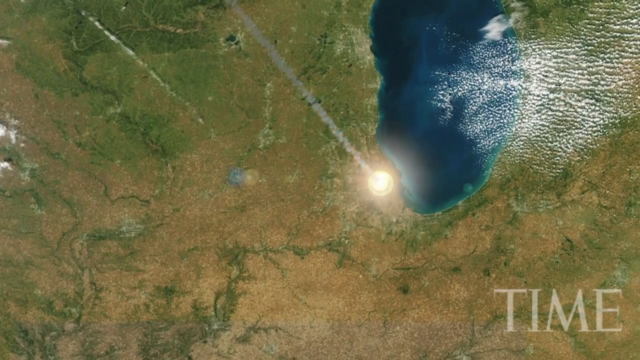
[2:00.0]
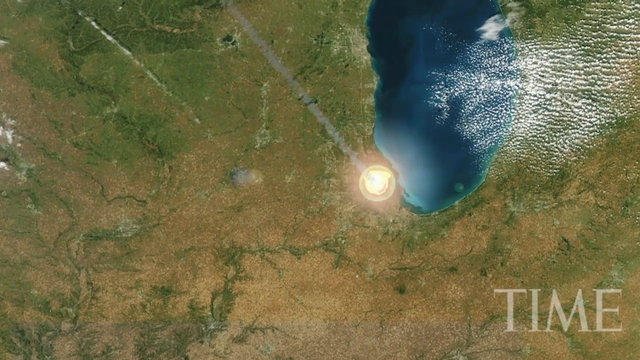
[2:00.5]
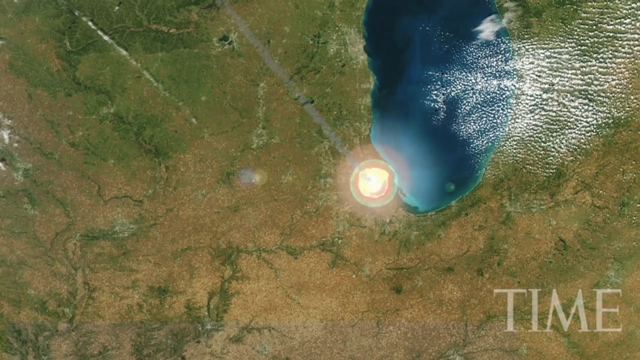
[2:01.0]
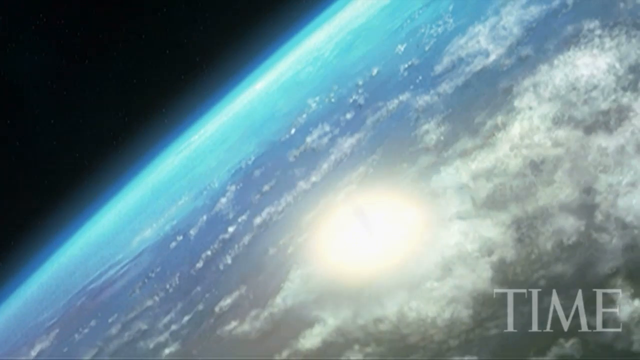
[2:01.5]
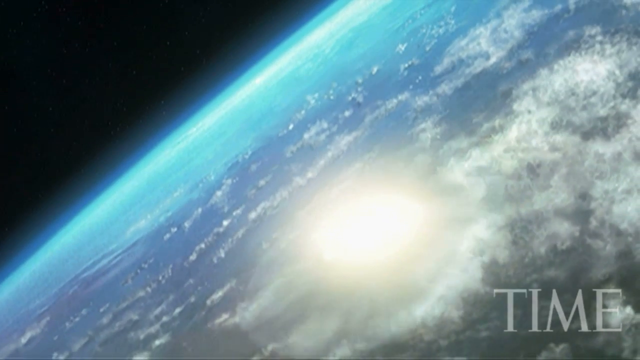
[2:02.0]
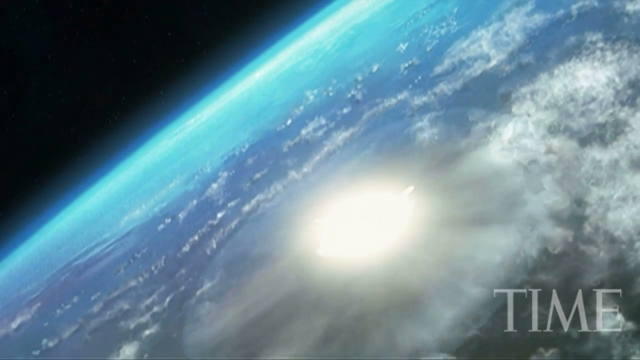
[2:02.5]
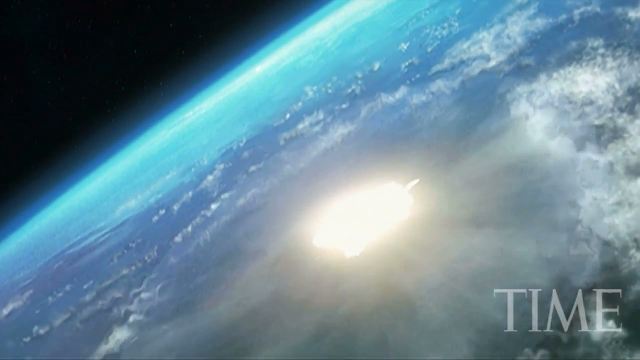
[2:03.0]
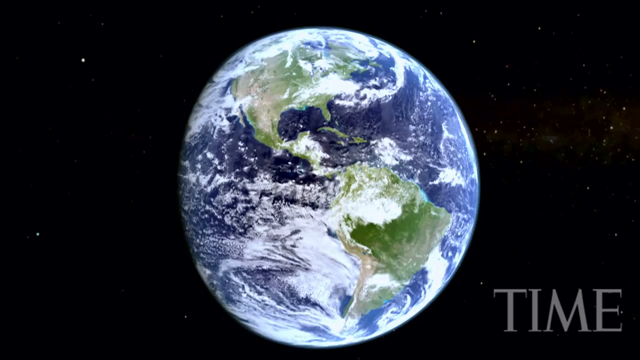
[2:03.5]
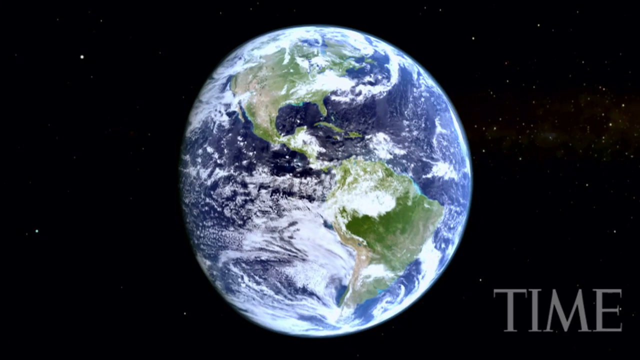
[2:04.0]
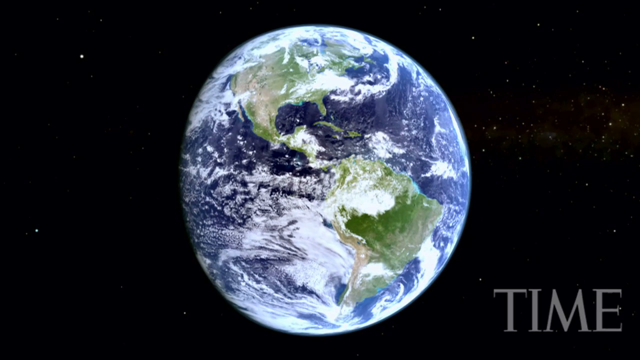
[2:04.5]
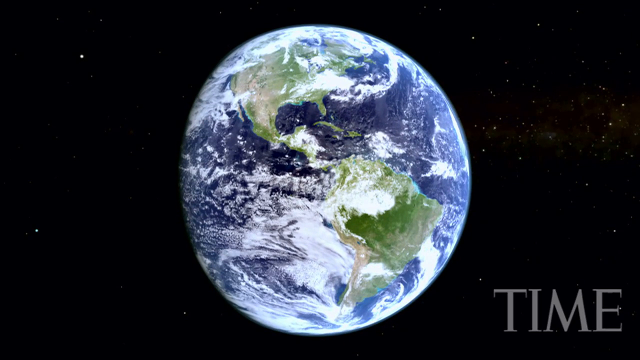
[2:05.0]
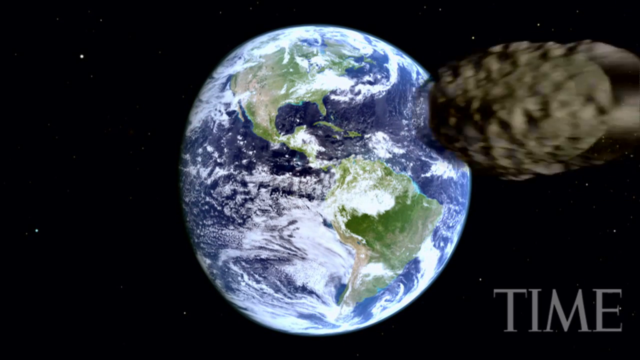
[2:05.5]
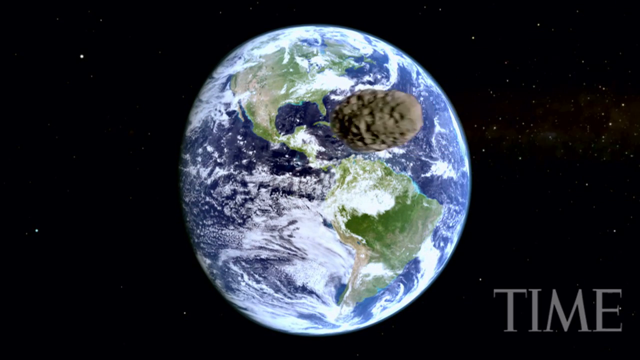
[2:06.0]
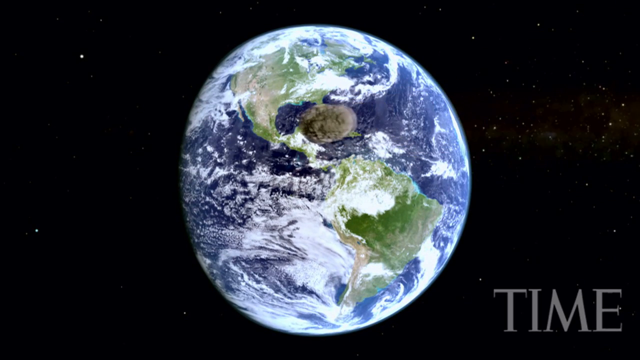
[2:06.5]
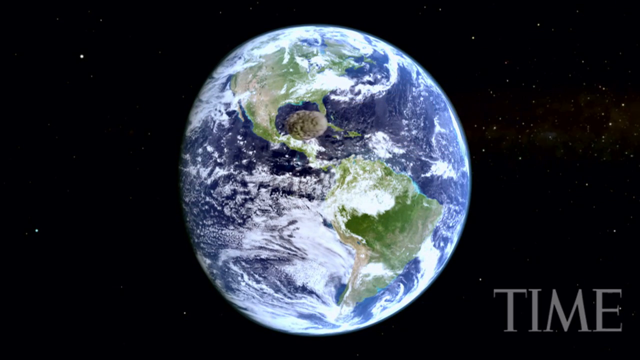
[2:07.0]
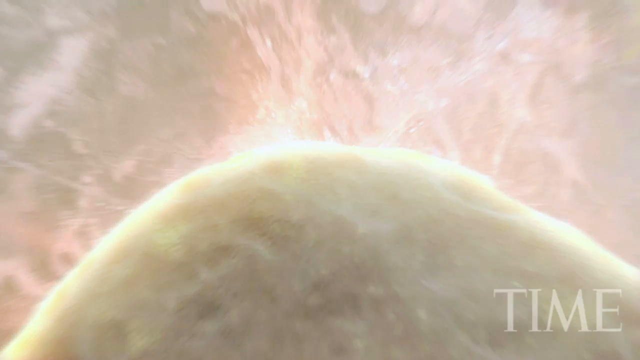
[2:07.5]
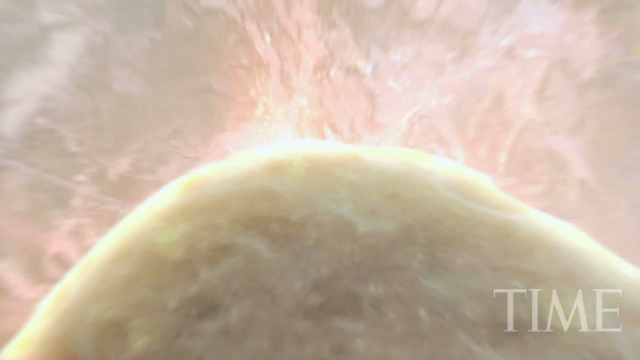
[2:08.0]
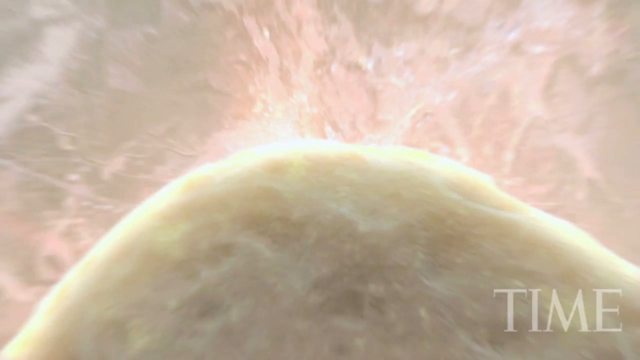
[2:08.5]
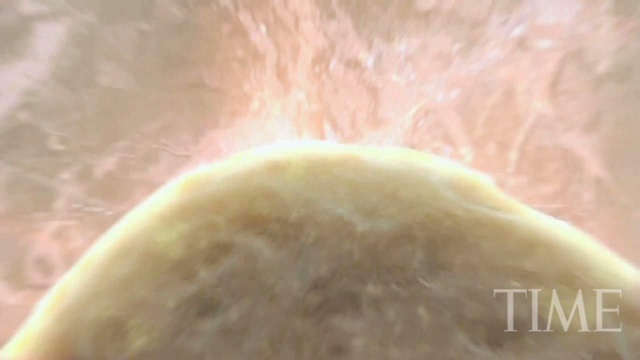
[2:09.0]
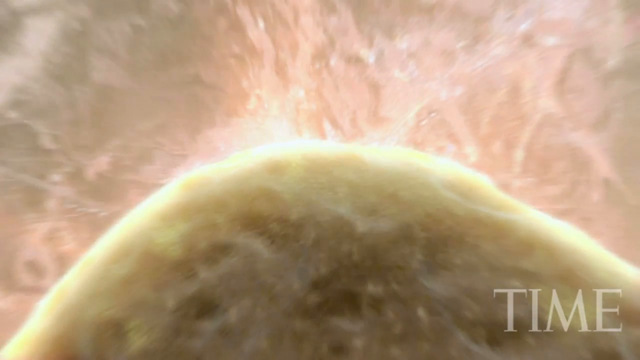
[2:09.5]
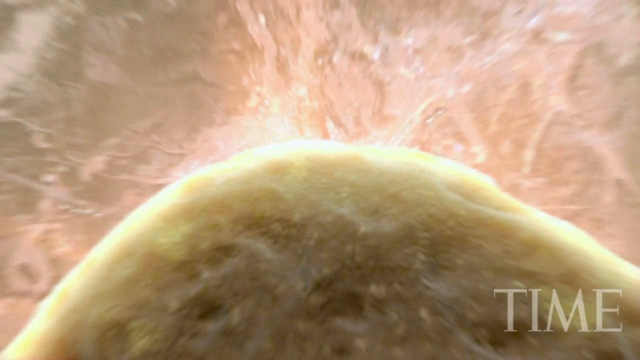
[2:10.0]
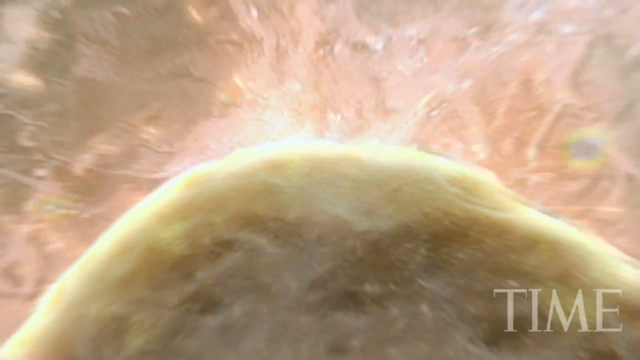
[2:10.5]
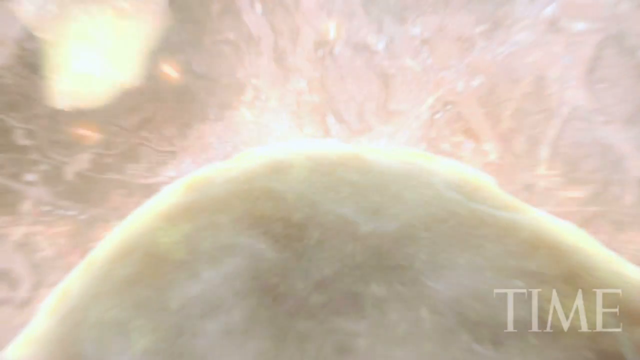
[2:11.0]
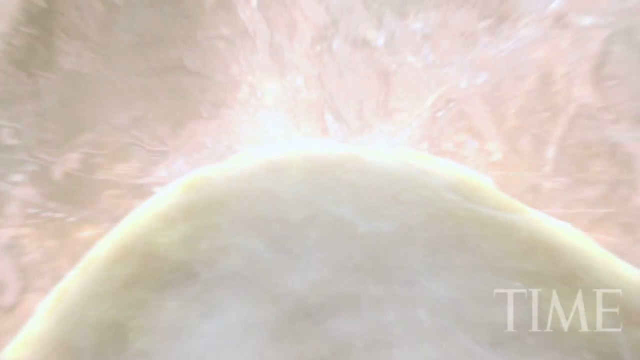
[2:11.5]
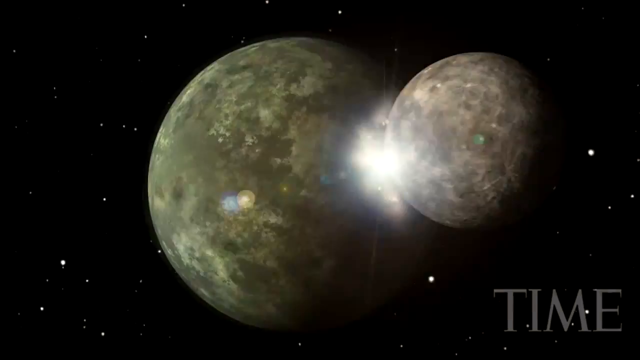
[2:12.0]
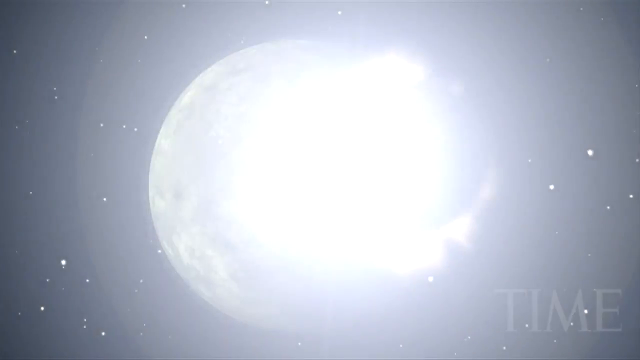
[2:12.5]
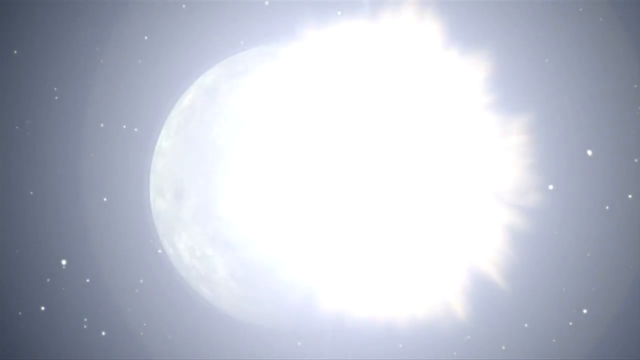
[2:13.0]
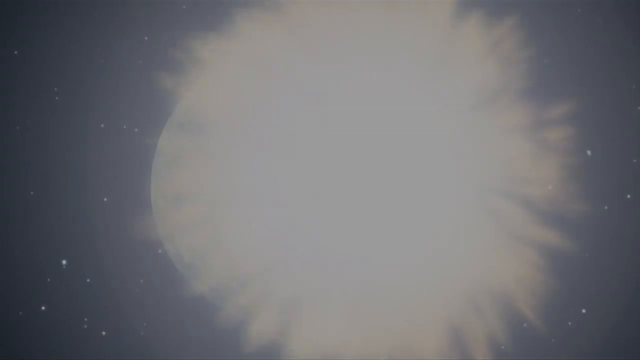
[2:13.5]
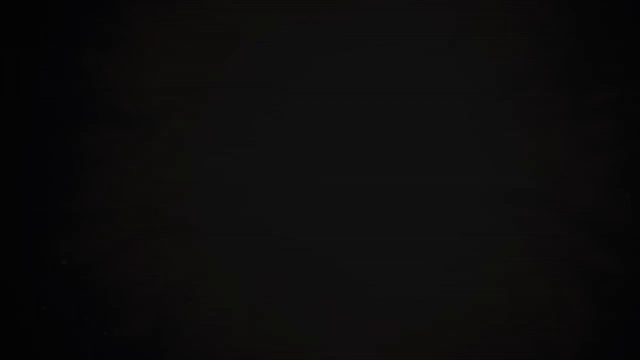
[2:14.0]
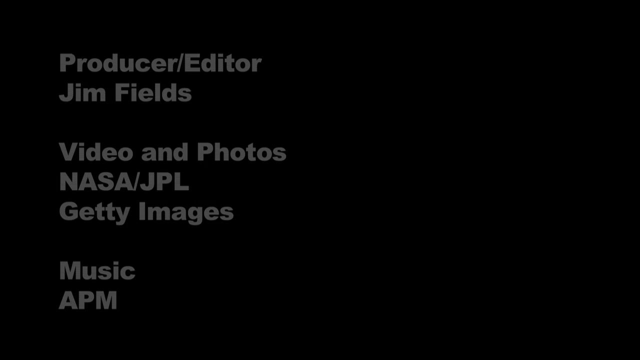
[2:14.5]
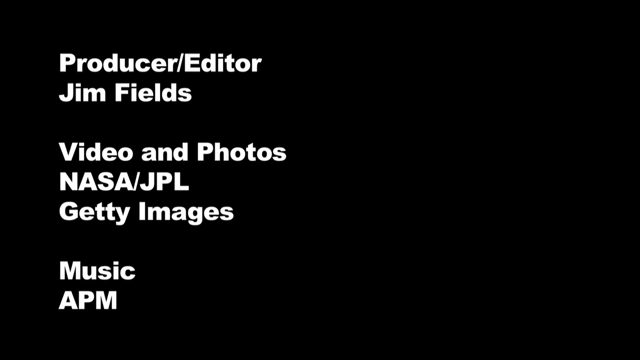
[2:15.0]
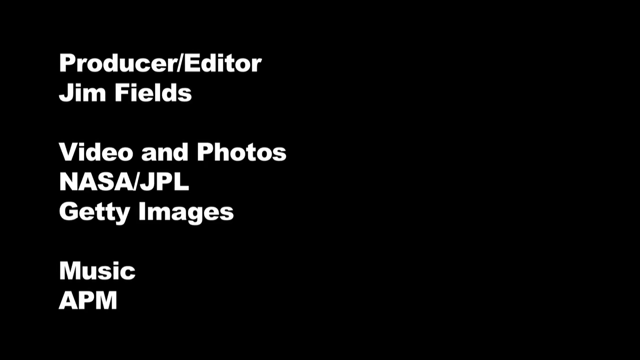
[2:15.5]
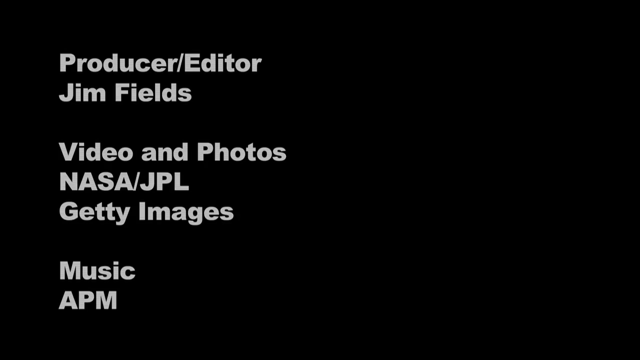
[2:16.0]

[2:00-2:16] An asteroid flies in from the upper left center of the screen down toward the middle and strikes Earth. The video then moves through different scenes of asteroids impacting Earth and asteroids flying through space toward Earth. The asteroids are large, oval, round objects, slowly turning in circles as they float through space. Some of the shock waves that follow the impacts are shown, along with a large image of Earth as seen from space.